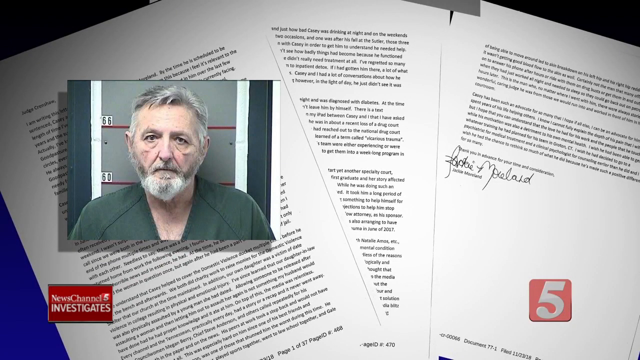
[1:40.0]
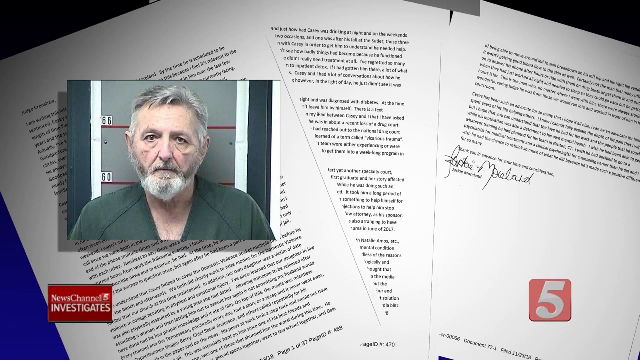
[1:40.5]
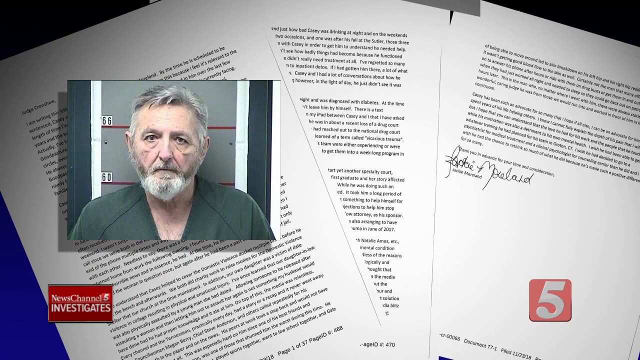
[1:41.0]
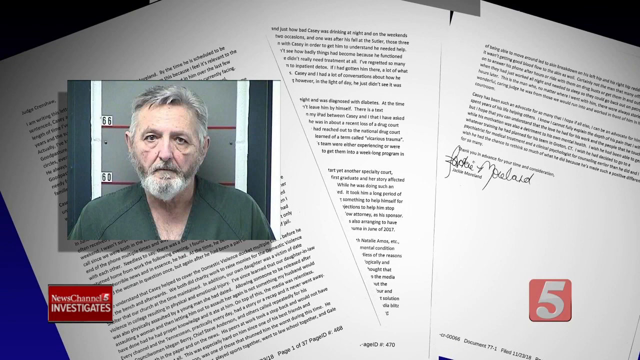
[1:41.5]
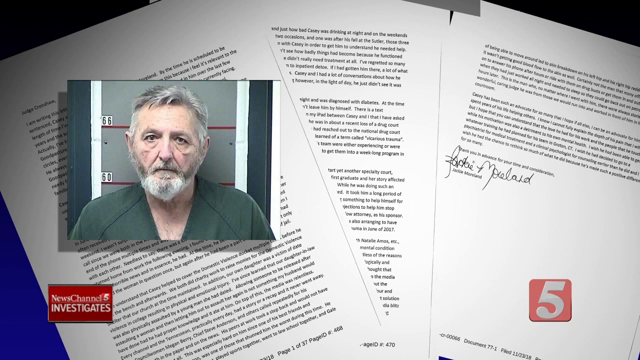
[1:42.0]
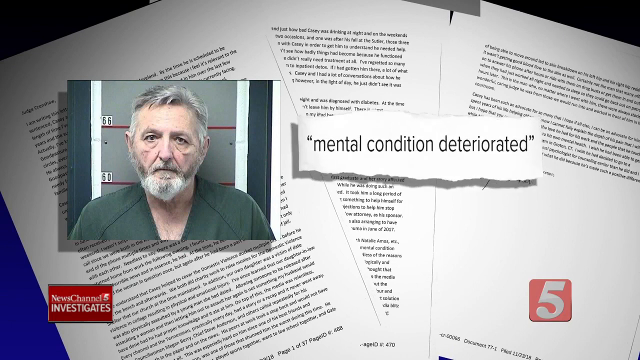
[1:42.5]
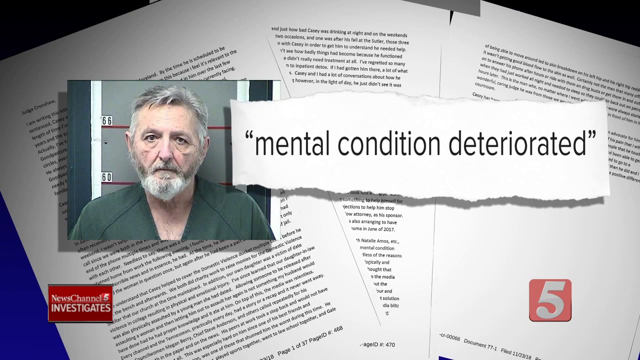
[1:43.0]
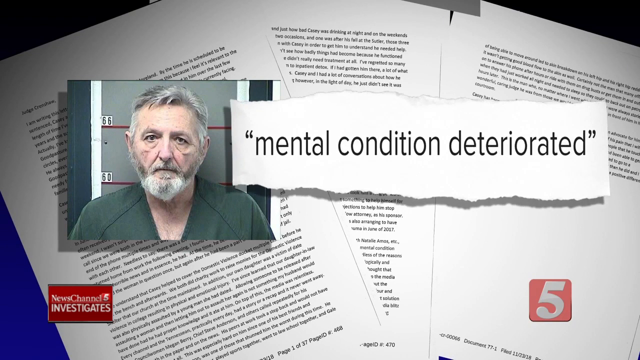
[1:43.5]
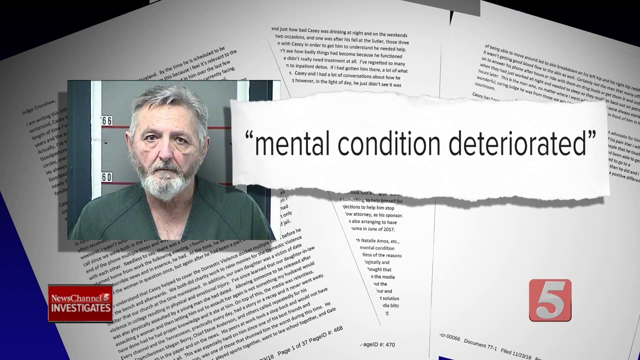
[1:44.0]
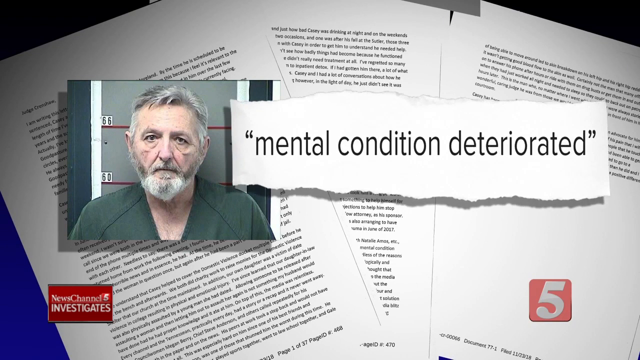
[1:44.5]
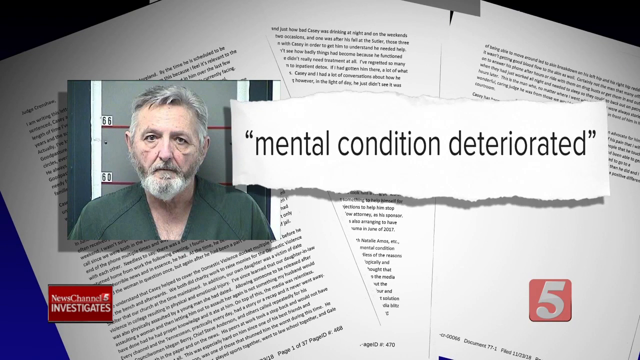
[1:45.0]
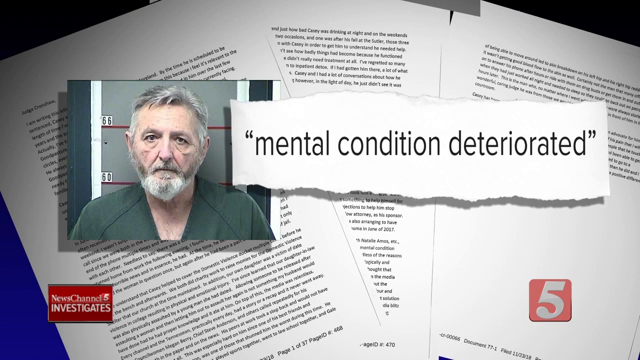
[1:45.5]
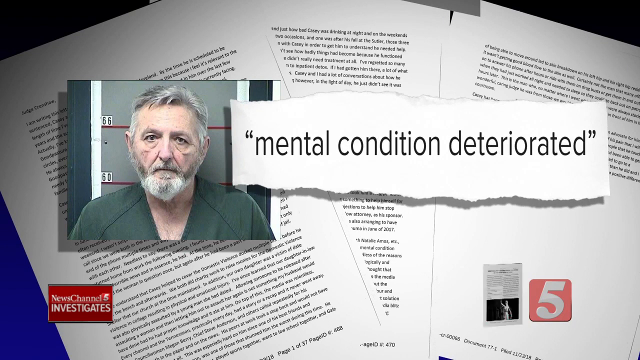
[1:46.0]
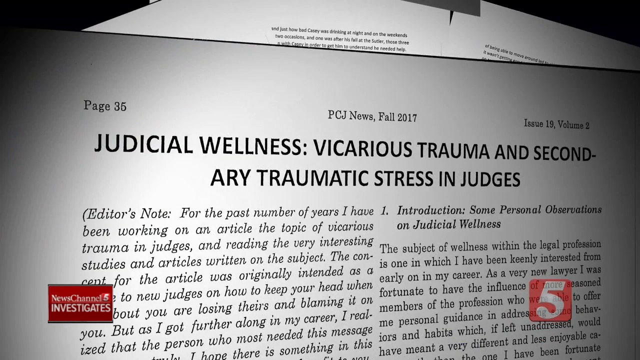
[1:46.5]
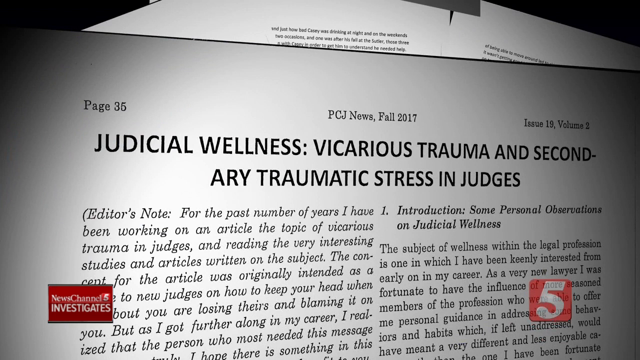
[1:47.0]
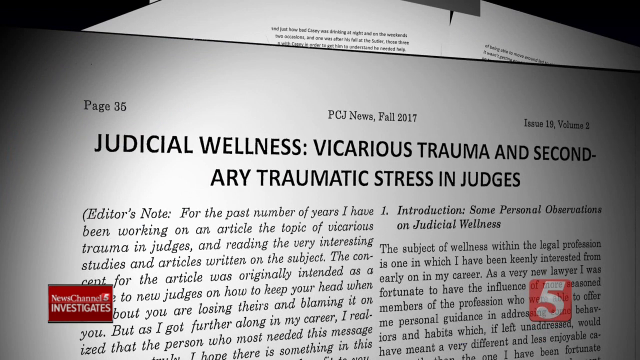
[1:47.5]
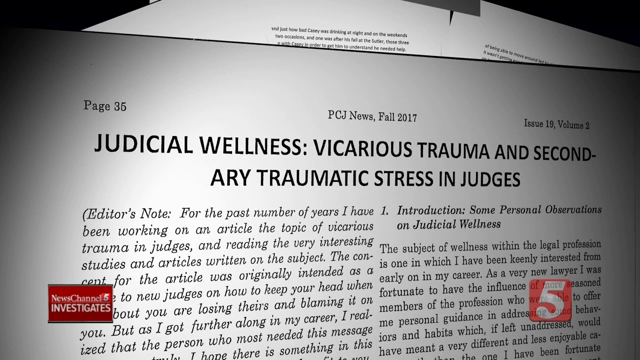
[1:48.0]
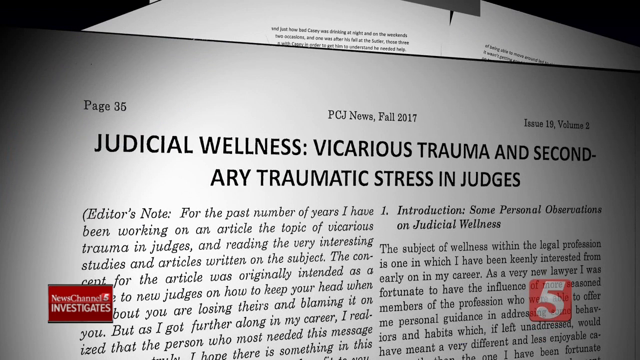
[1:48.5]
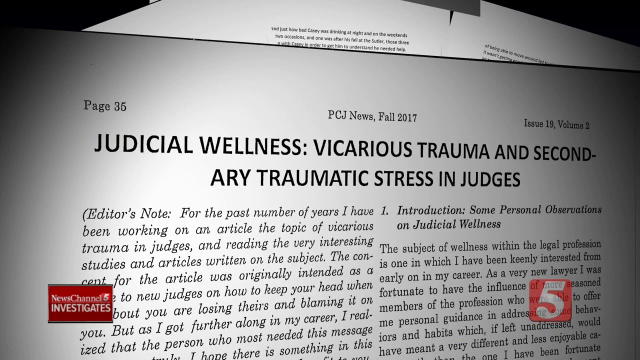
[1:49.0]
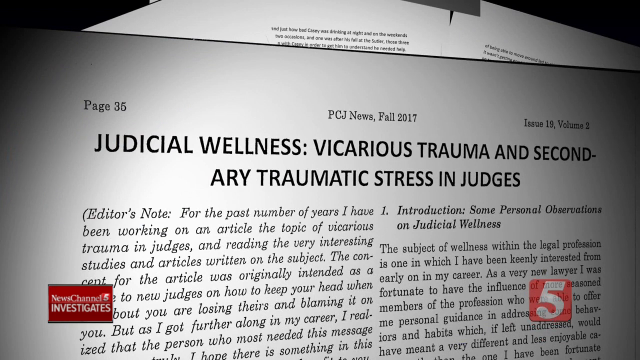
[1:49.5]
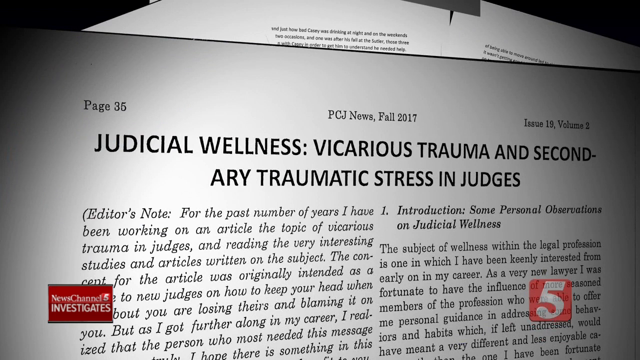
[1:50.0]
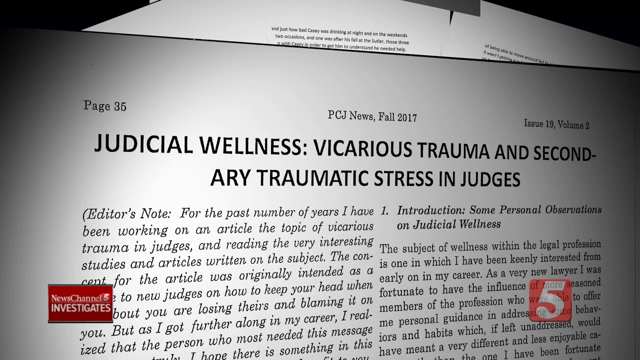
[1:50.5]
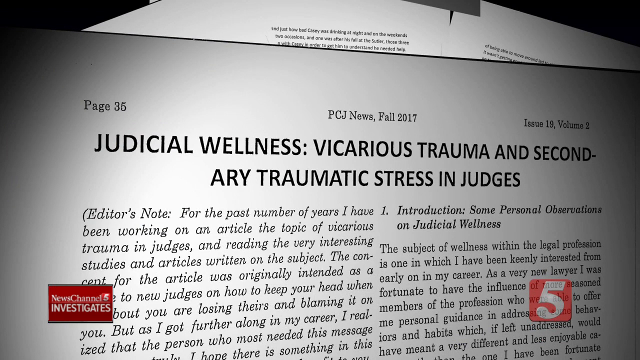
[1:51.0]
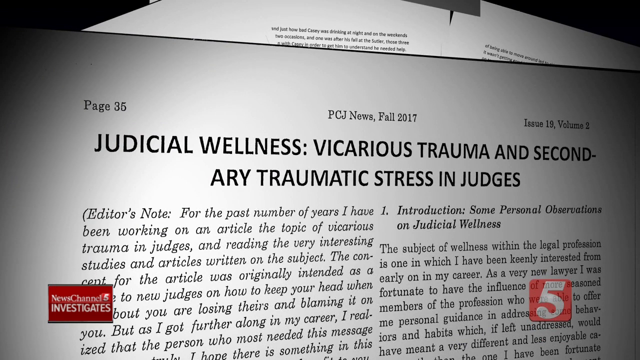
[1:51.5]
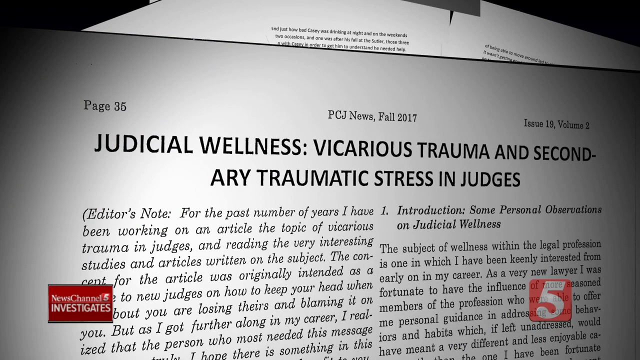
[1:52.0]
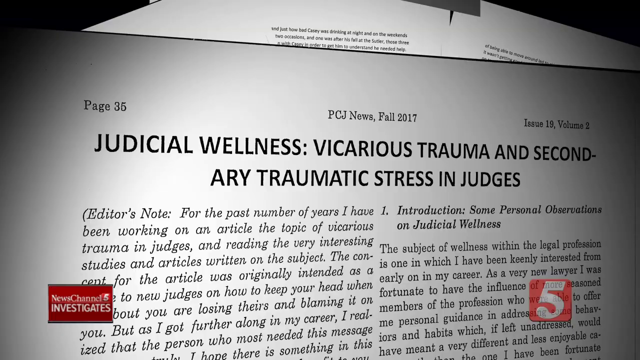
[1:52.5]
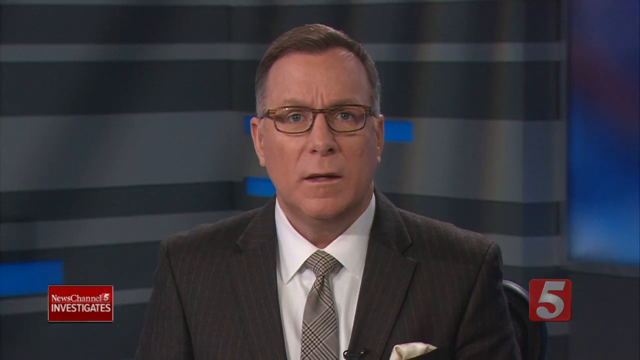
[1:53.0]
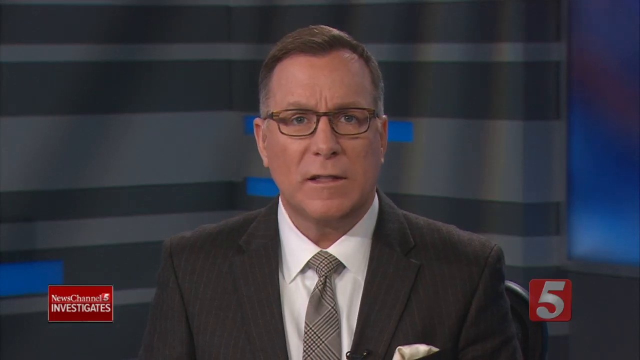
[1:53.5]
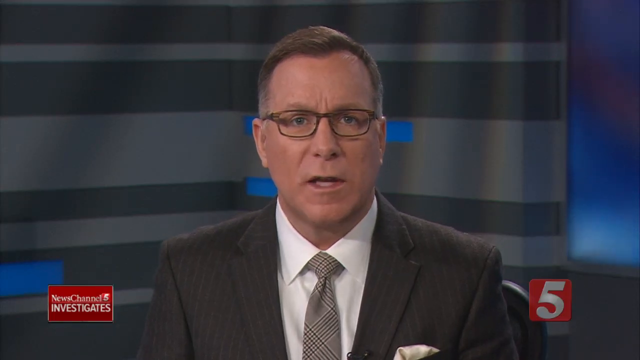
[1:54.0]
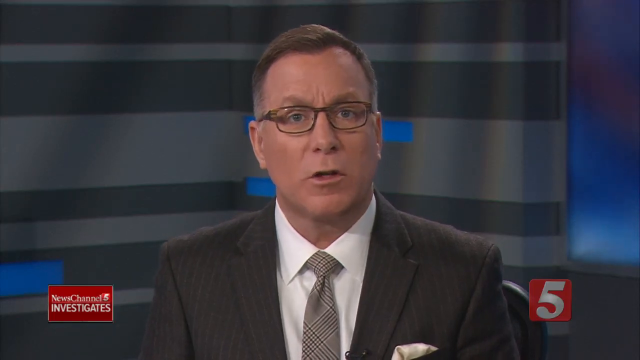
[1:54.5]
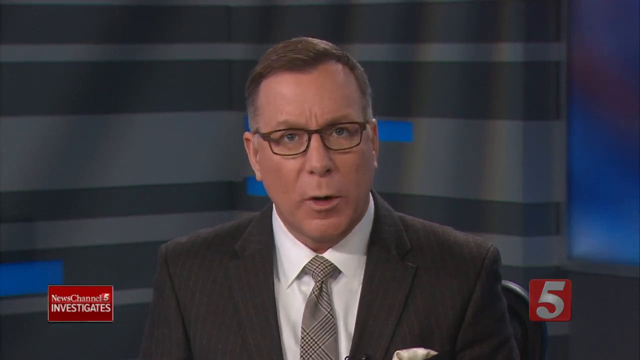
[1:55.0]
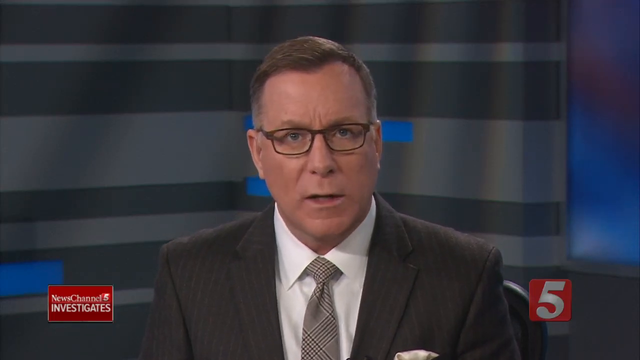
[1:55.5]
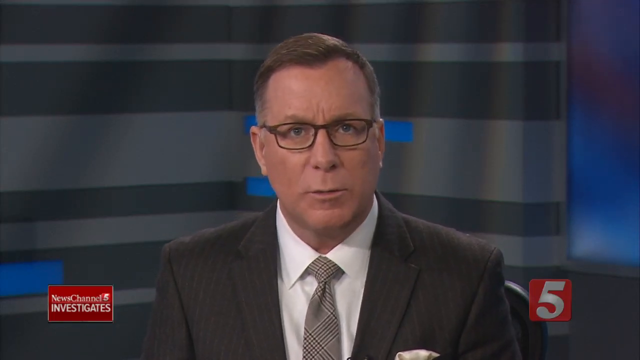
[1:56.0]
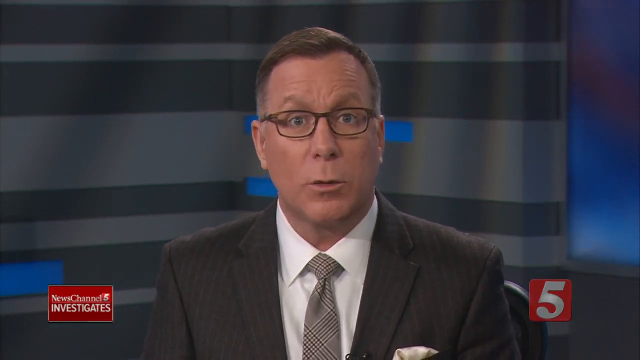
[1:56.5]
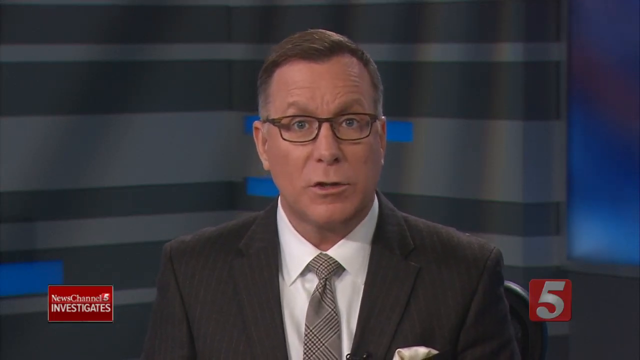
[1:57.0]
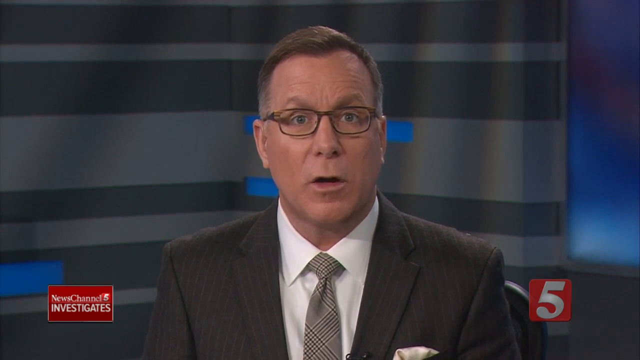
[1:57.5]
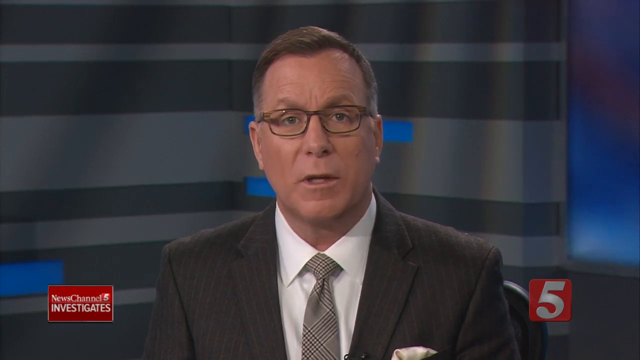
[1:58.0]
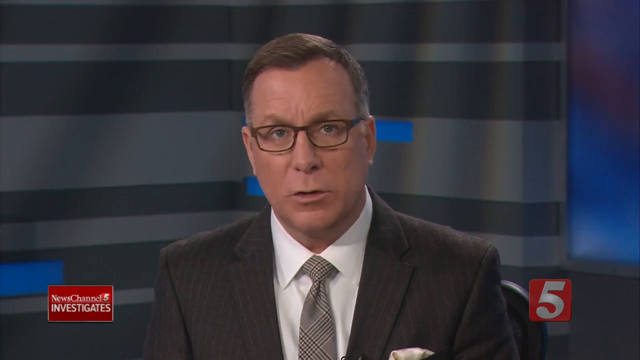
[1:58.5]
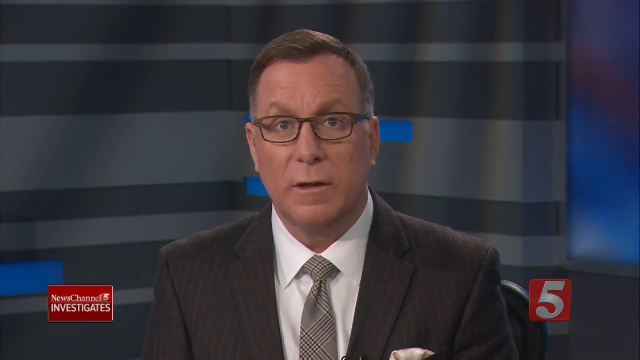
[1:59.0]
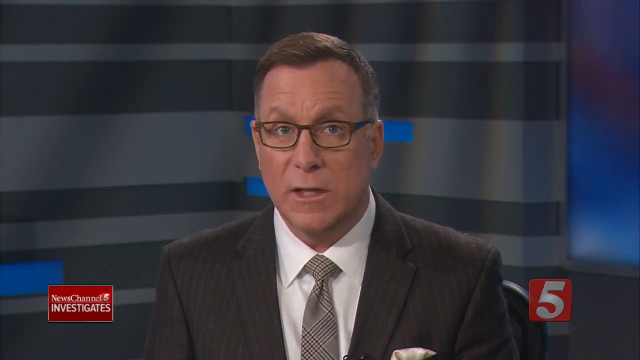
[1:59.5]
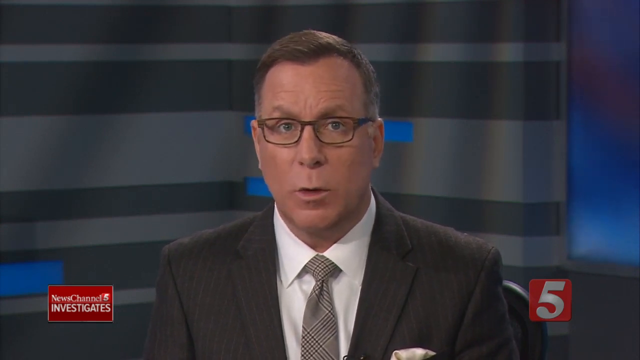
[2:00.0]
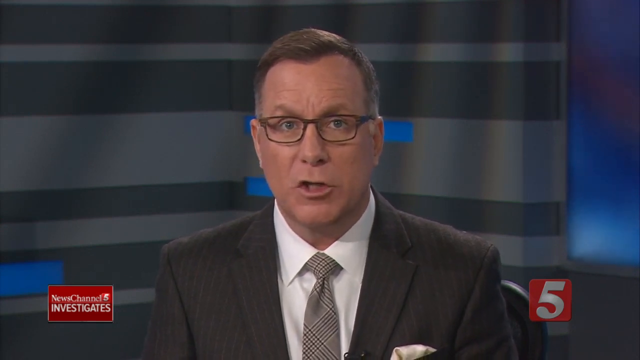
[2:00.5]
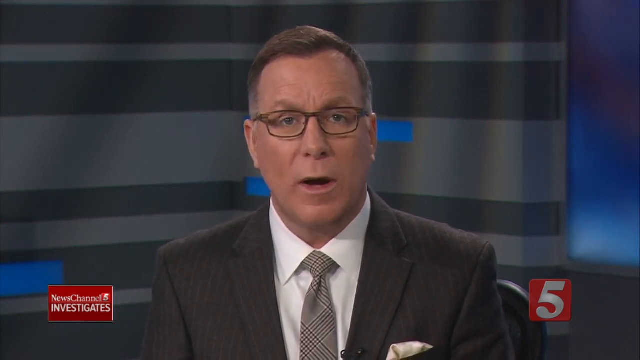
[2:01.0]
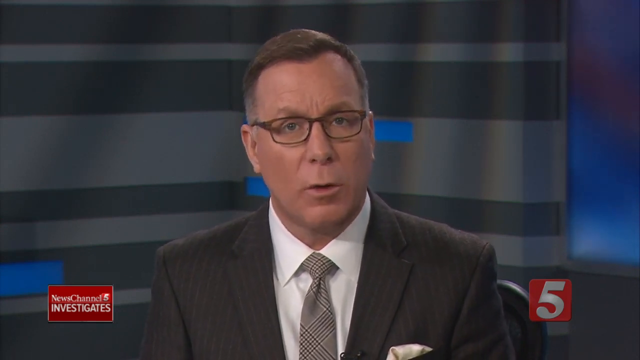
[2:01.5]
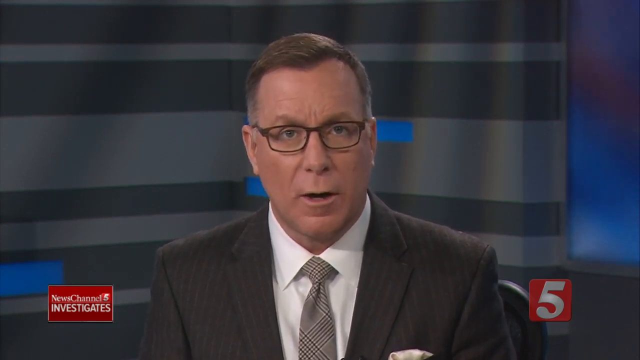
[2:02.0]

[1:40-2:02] A section of the document moves to the front of the screen, with the words "mental condition deteriorated" in quotes. Next, what appears to be a journal article moves in from the right-hand side, very close to the screen so it can be read. The top left shows page 35; centered at the top it reads "PCJ News, Fall 2017", and at the far left of the top, "Issue 19, Volume 2". The title of the article, in all caps, is "Judicial Wellness : Vicarious Trauma, and Secondary Traumatic Stress in Judges". The video then goes back to the news anchor: only the gentleman in the gray suit with glasses is shown. Behind him is a wall of dark gray and light gray stripes varying in color, with four small rectangular blocks placed randomly behind him and to his right.